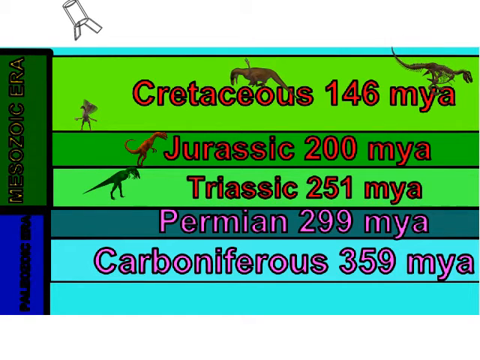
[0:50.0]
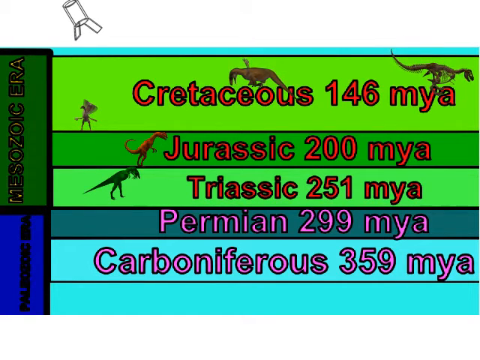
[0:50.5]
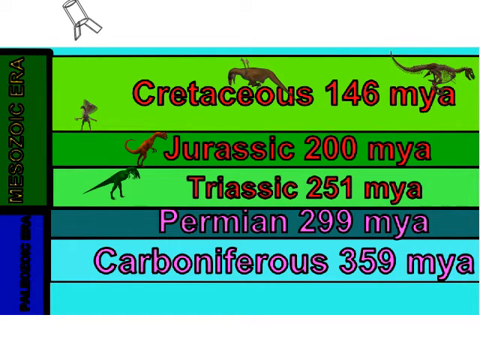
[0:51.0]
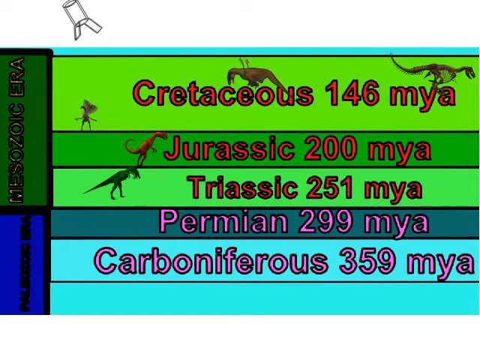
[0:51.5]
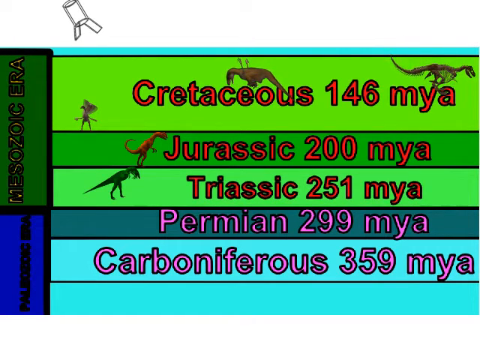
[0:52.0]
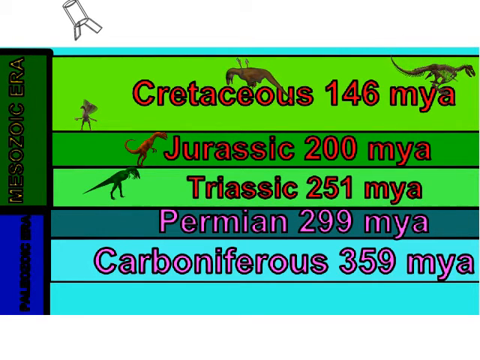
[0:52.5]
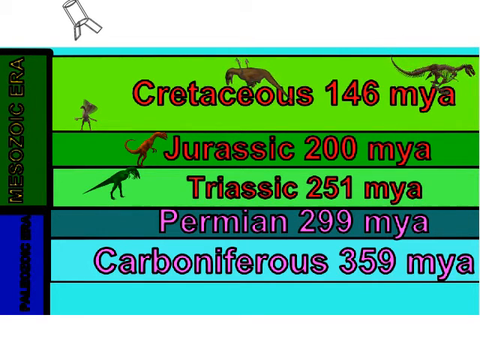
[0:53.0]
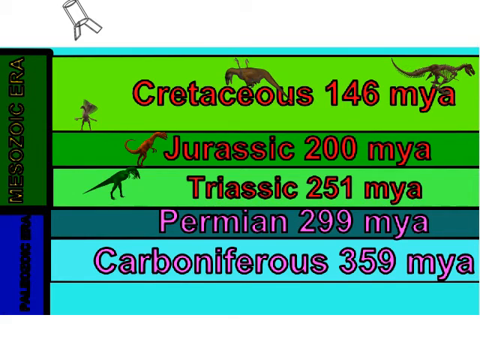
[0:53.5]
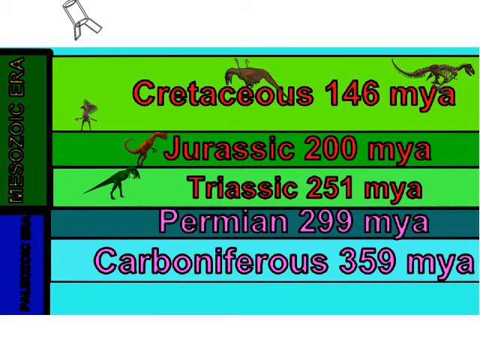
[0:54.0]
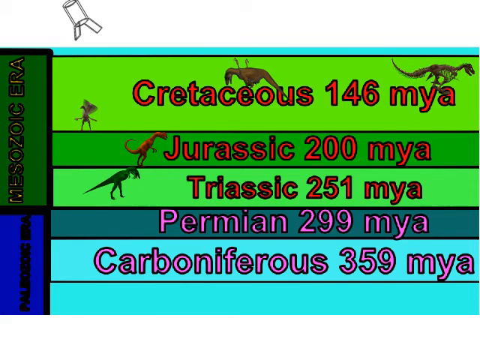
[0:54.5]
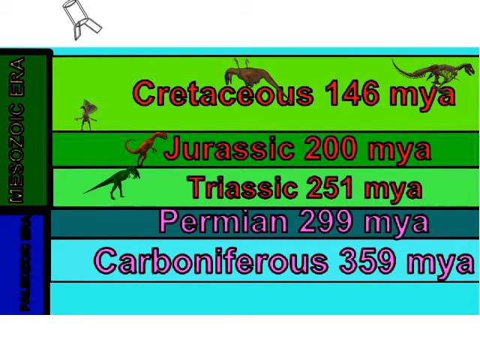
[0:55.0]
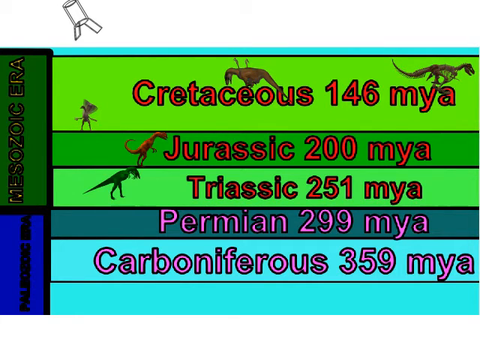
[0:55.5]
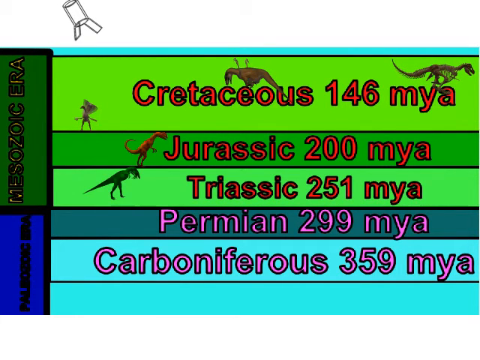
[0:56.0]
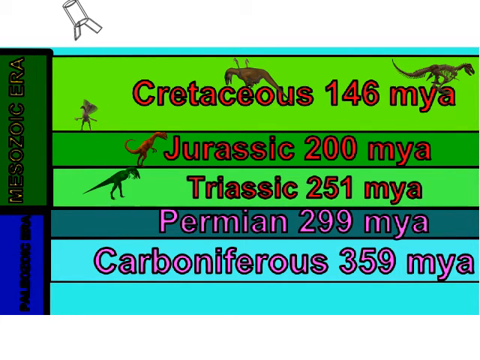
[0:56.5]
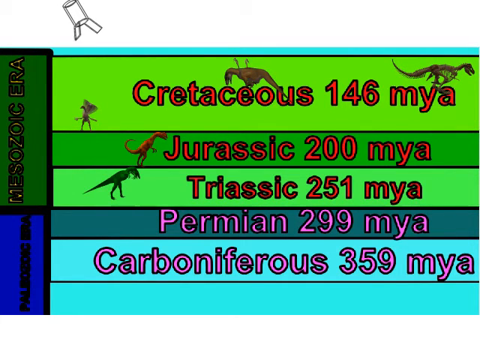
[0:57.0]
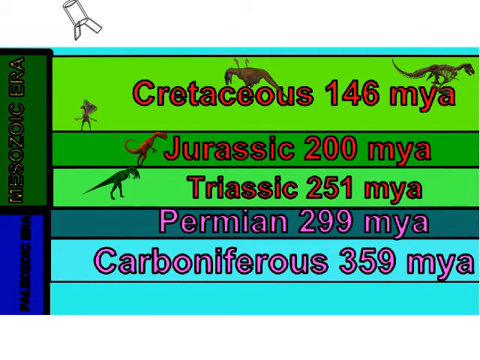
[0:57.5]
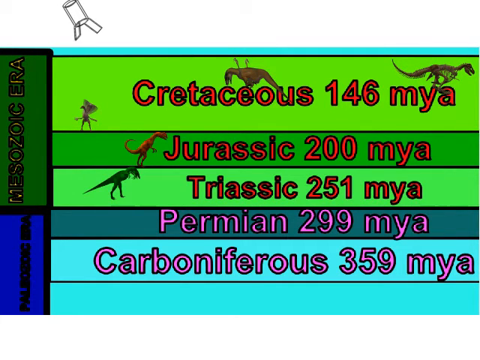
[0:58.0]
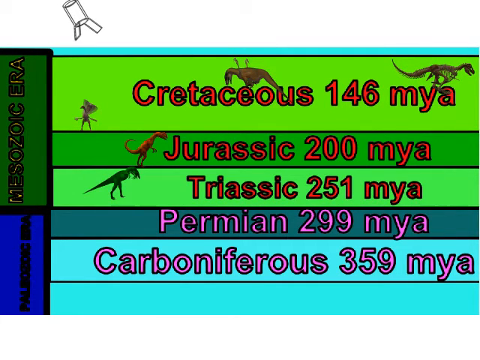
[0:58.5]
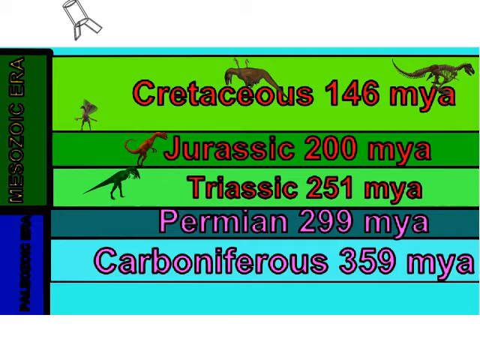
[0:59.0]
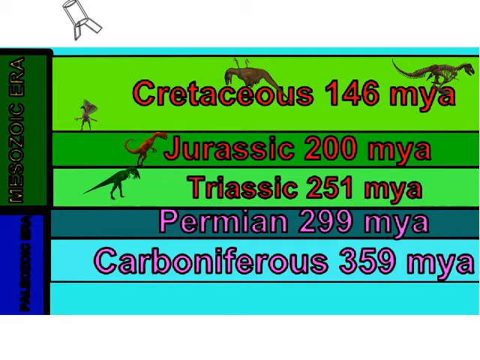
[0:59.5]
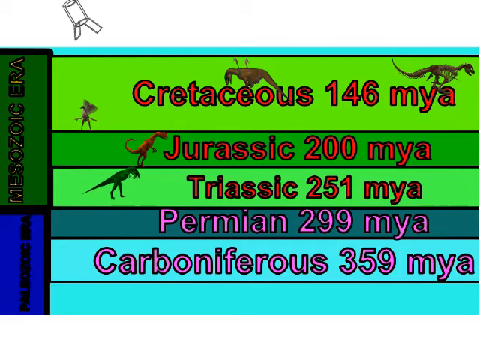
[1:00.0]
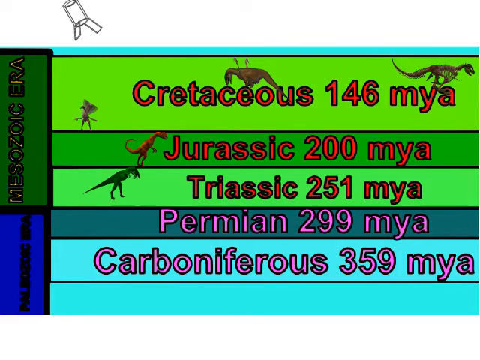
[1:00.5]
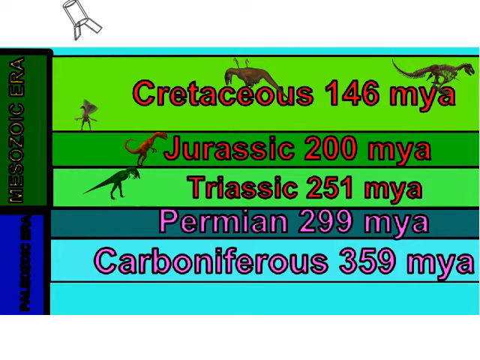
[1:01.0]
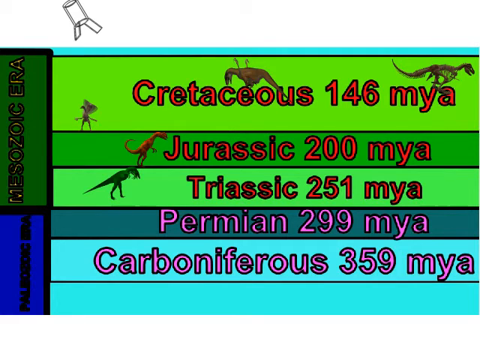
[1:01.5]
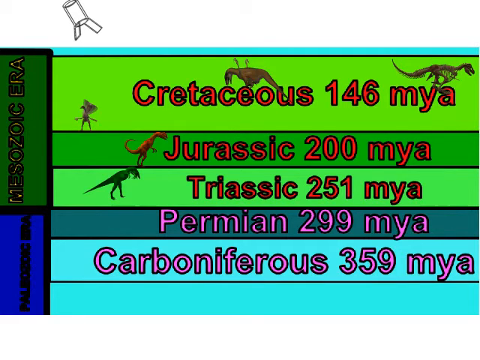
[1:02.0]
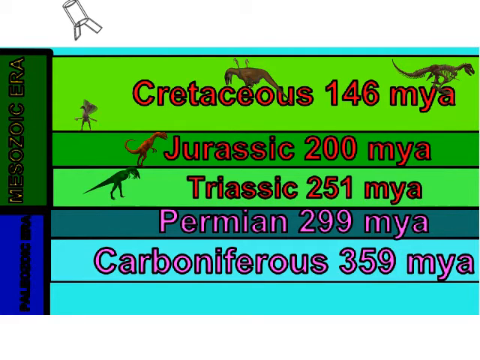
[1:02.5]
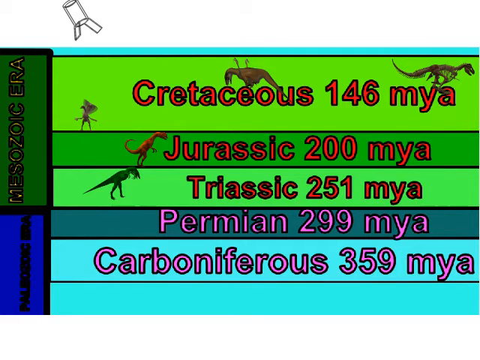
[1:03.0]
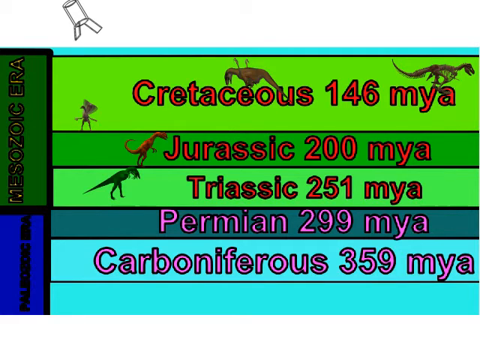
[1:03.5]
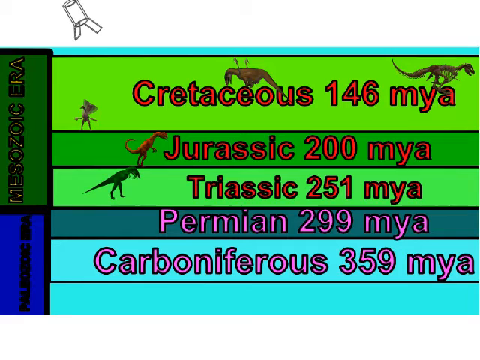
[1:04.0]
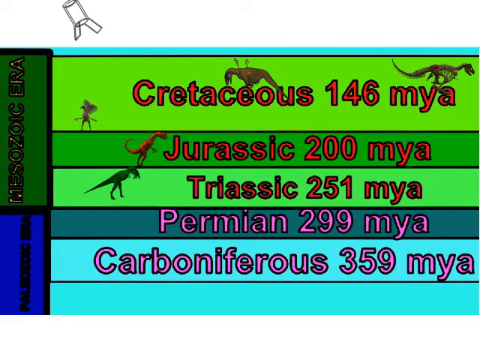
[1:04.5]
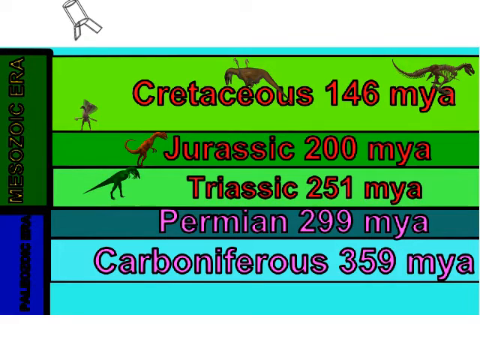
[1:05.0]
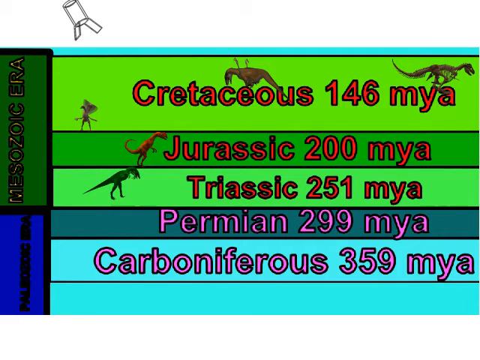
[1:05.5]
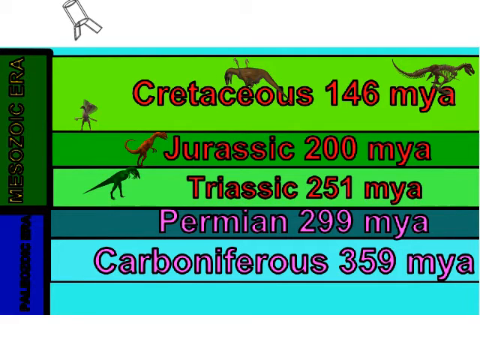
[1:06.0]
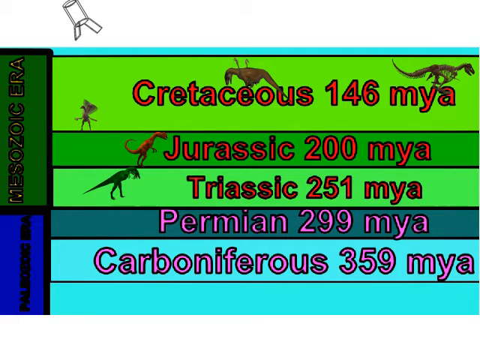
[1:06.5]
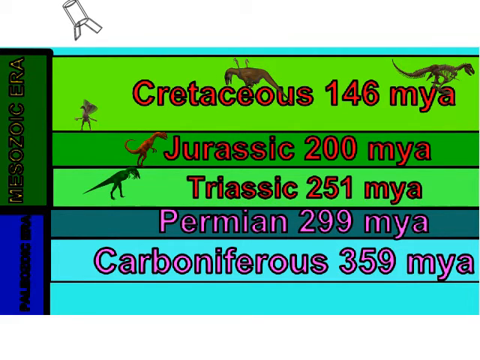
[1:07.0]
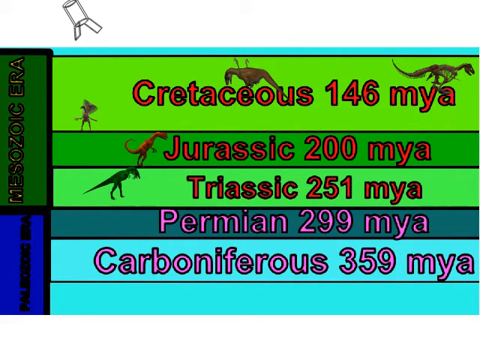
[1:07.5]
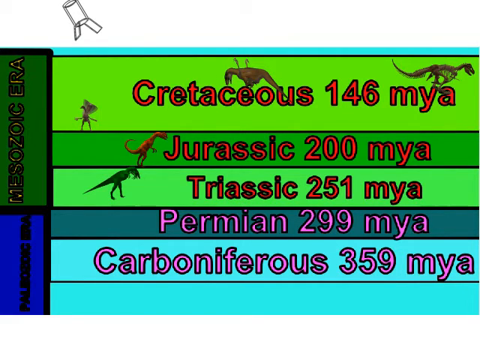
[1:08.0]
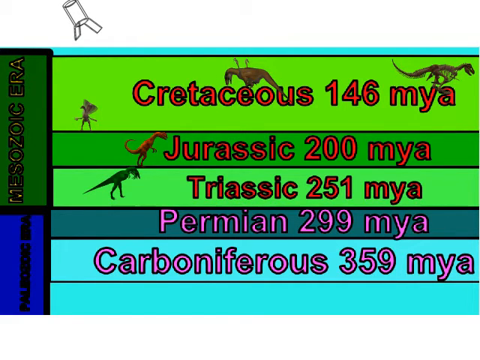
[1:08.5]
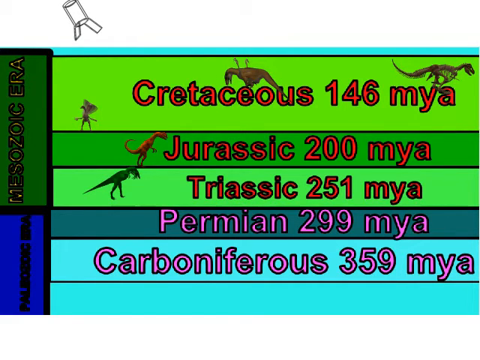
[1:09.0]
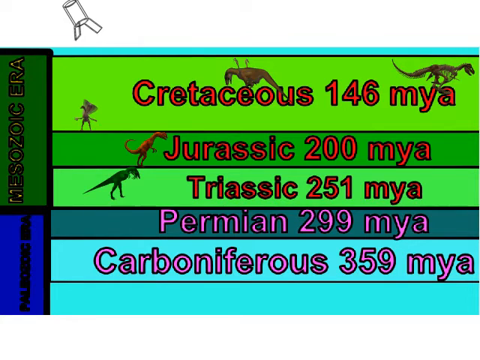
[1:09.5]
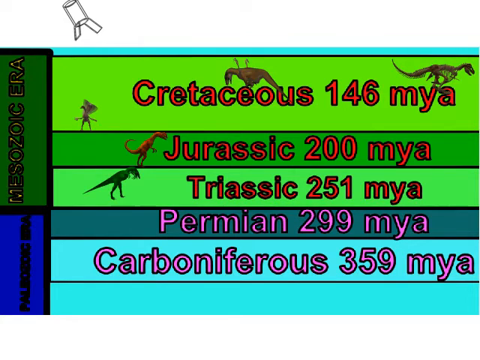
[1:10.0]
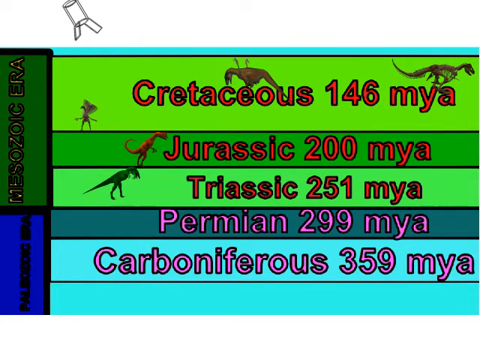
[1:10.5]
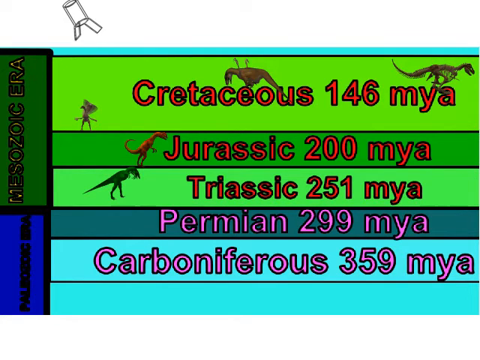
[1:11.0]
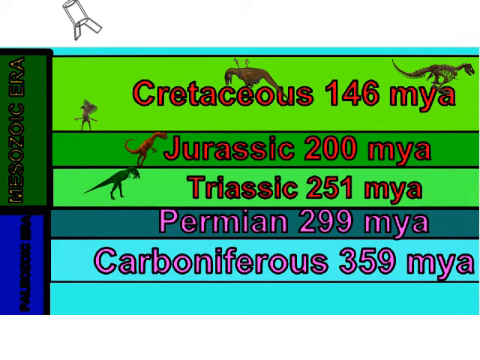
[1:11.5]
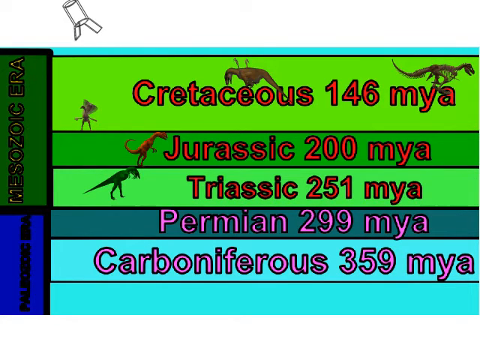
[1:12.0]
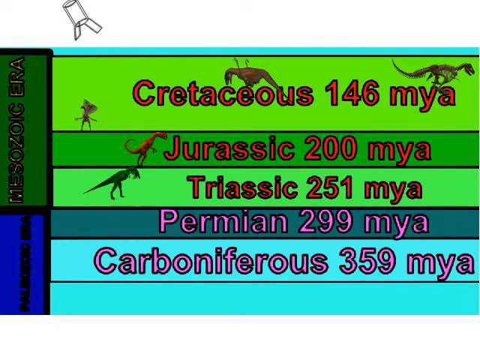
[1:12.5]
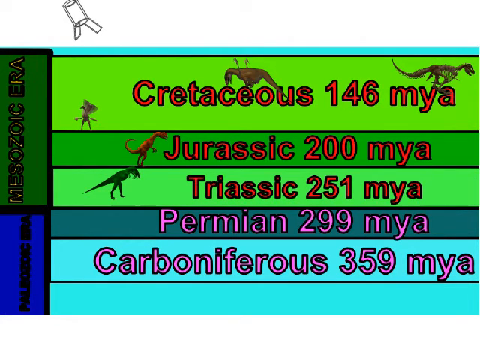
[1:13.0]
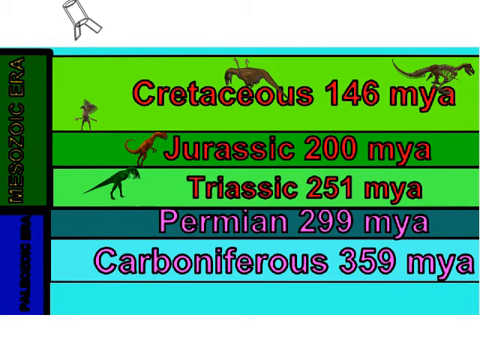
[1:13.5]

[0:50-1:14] Five dinosaurs are now stationary, no longer moving in slow motion. Each dinosaur is stationed behind the words, which include "Cretaceous 146", "Jurassic 200", "Triassic 251", "Carboniferous 359" and "MYA". Some of the words are written in purple and others in red. With five names and five different types of dinosaurs, the names seem to belong to the dinosaurs. The dinosaurs are not of the same kind; they differ in nature and stature.